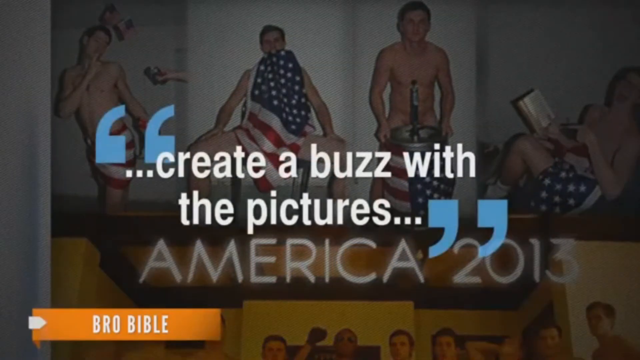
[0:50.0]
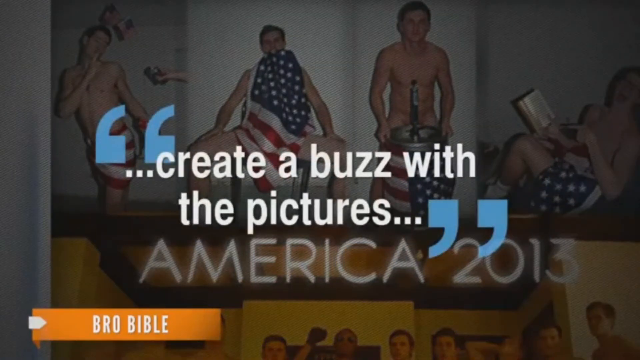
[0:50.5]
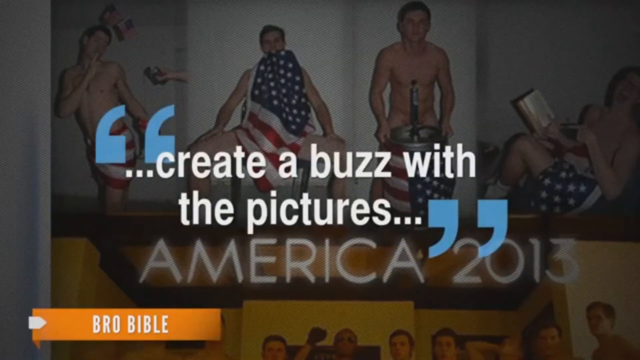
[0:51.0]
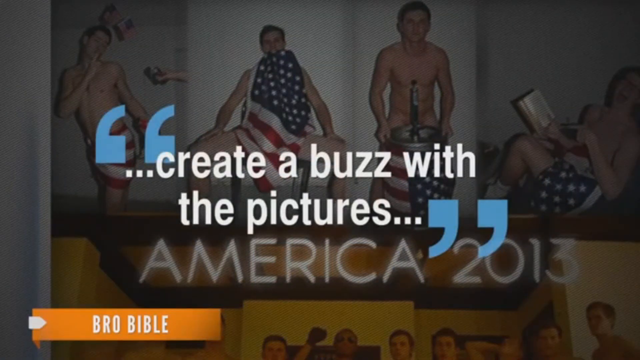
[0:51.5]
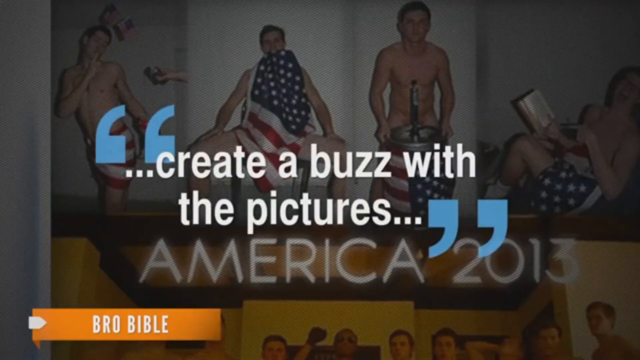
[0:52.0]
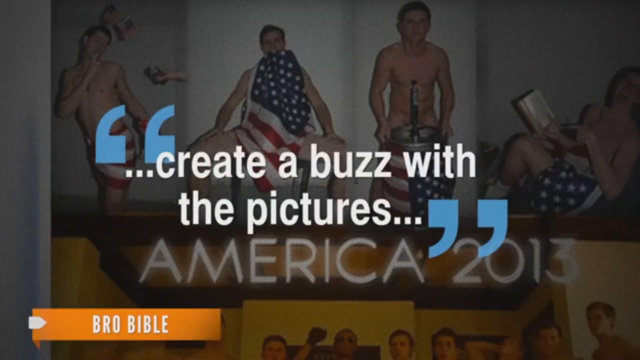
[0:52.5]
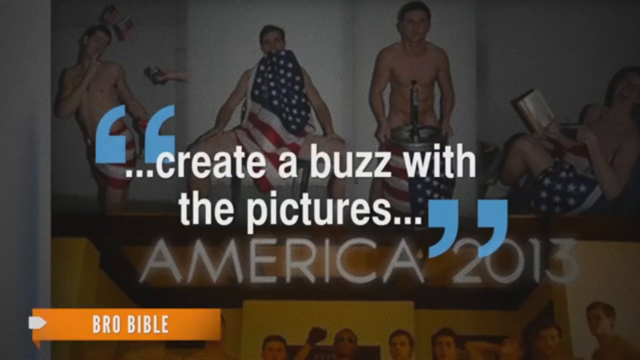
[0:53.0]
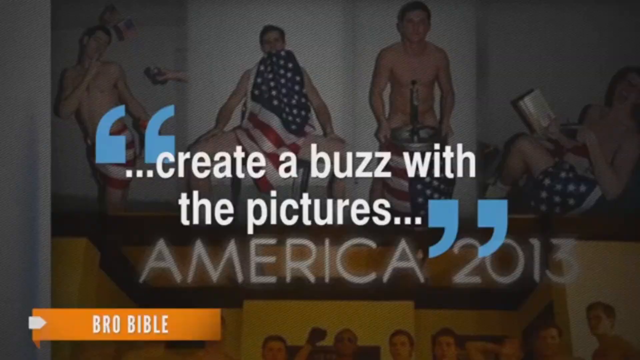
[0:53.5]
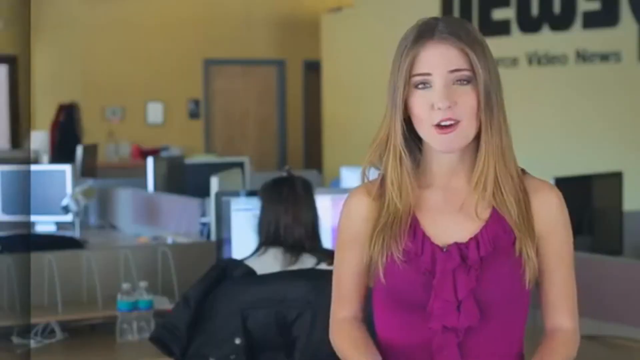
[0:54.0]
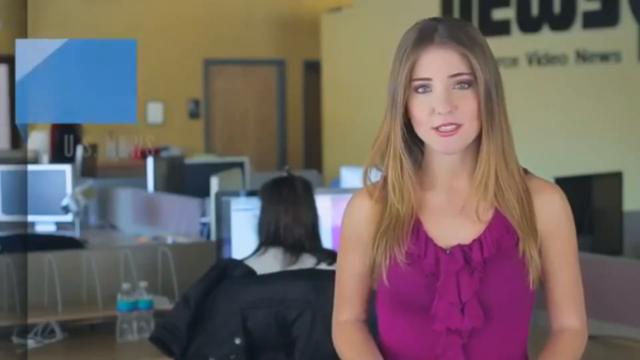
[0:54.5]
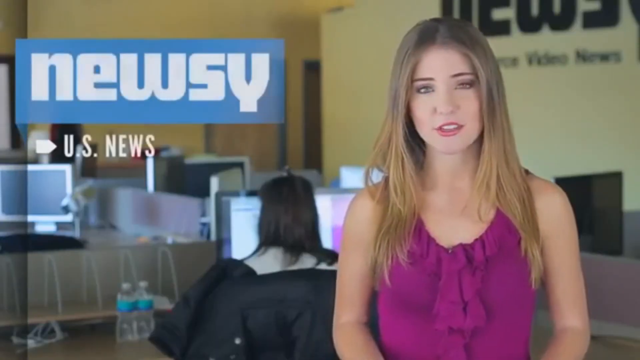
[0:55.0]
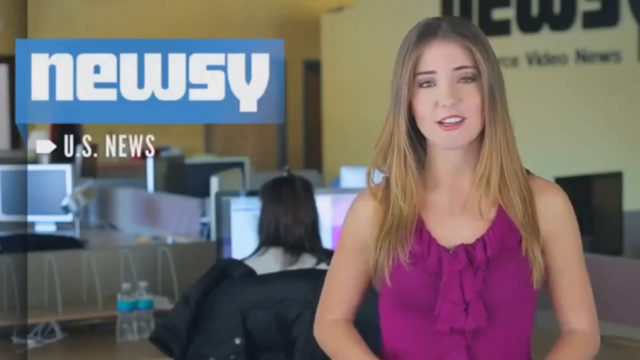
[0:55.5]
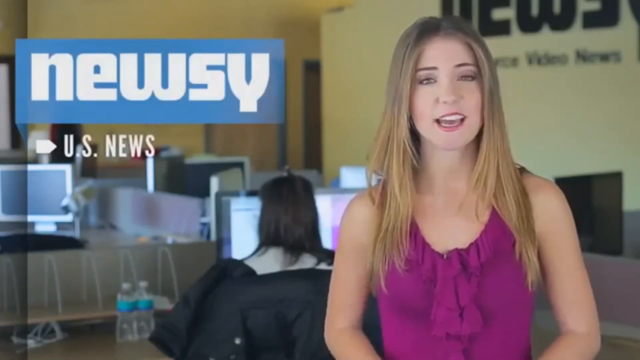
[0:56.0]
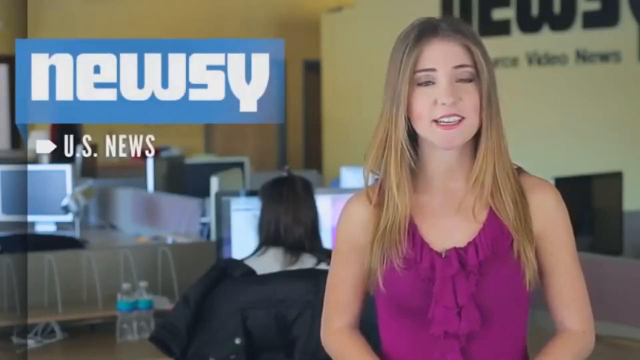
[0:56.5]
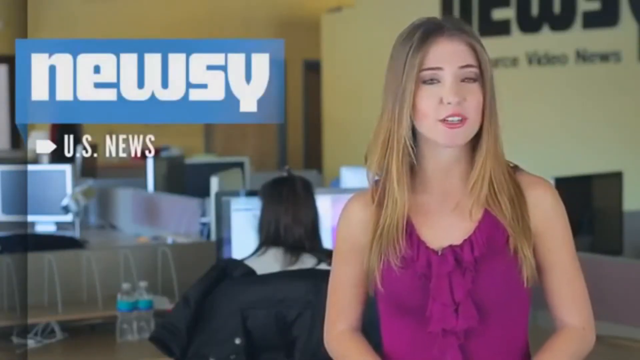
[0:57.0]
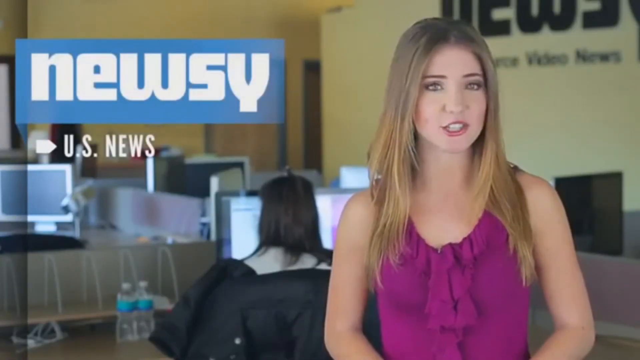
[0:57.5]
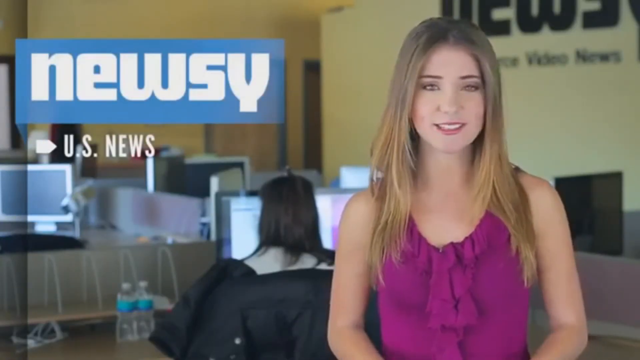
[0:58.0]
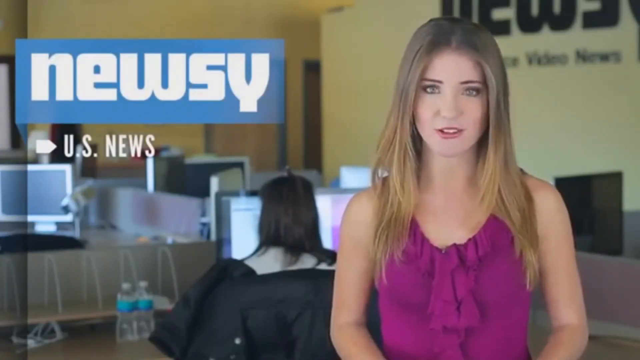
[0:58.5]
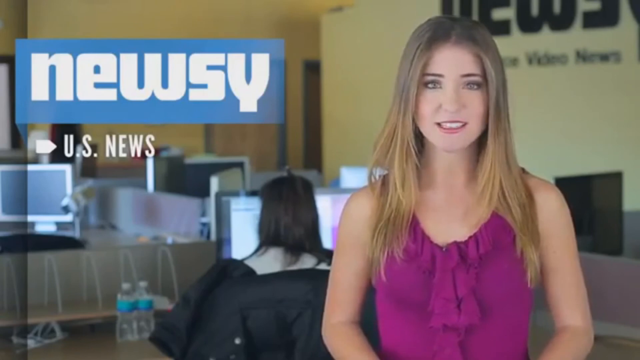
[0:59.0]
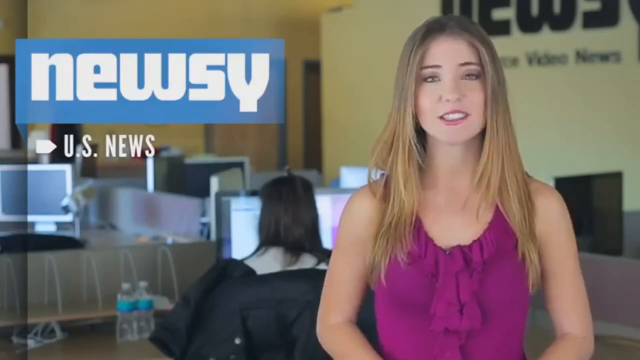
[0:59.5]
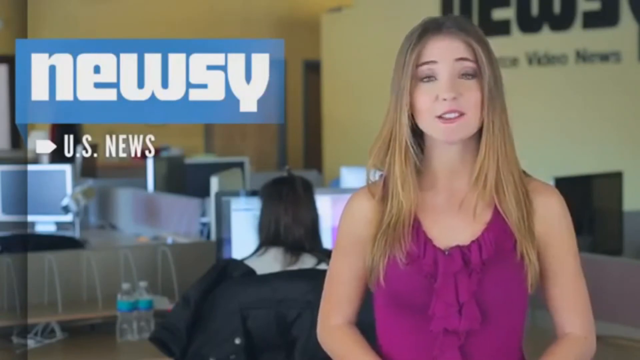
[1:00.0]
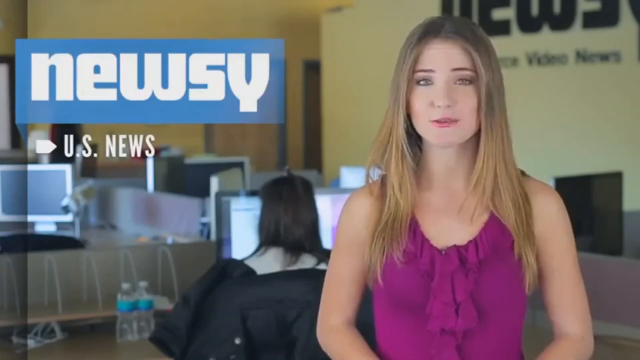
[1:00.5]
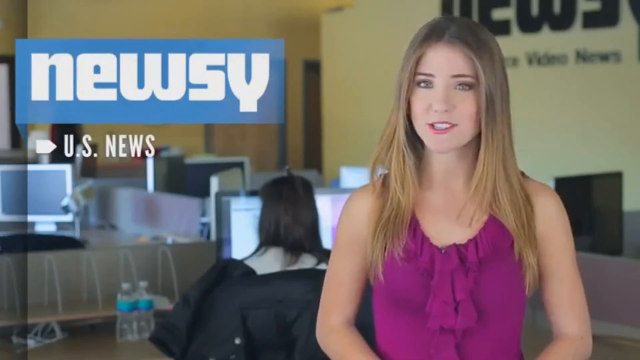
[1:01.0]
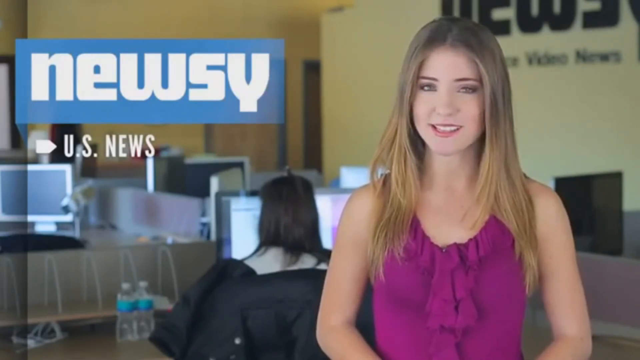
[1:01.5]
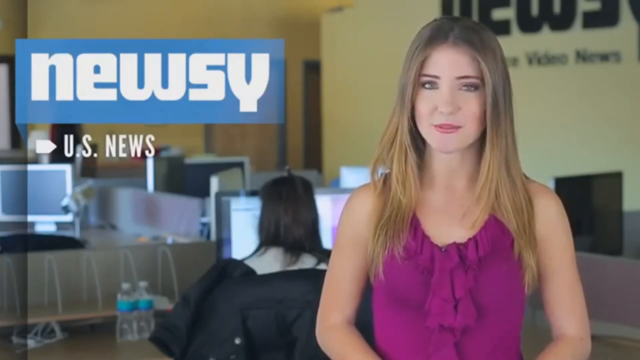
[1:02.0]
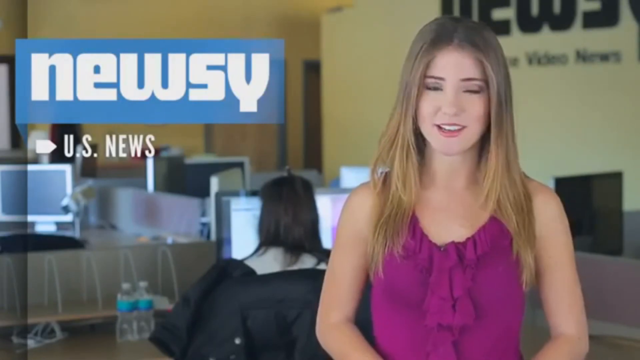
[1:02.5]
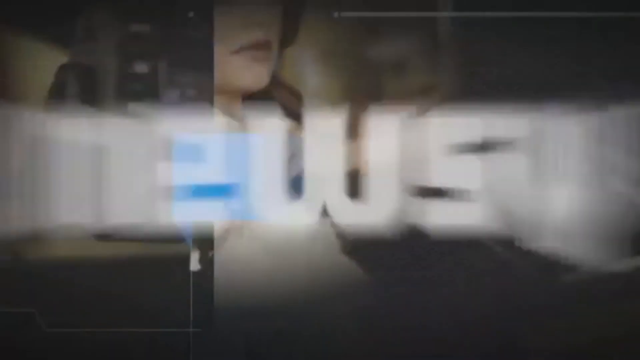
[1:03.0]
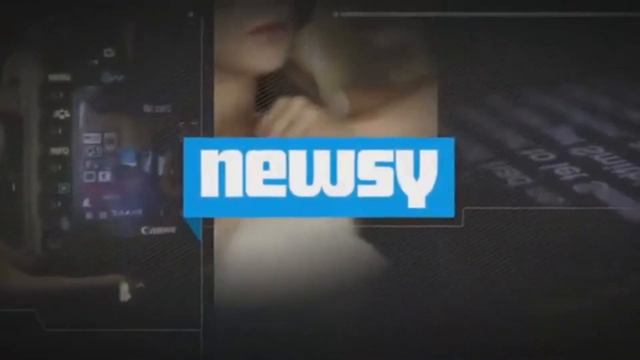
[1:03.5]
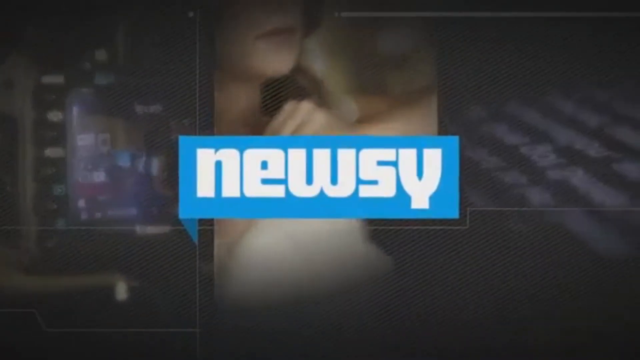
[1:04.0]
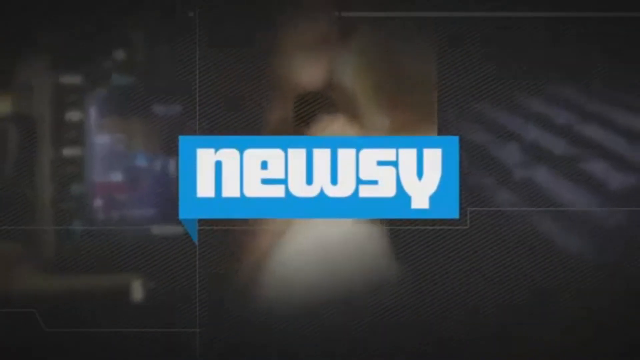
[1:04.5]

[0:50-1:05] A number of men in the background wear nothing but American flags covering themselves, with one standing in front of a keg that has an American flag on it. Text reads "...create a buzz with the pictures...", credited to Bro Bible. The scene changes to a woman standing in an office, speaking towards the camera. The Newsy logo is on screen, identifying this as US News. She wears a purple dress and speaks towards the camera before the video cuts to a Newsy logo with a few clips in the background.